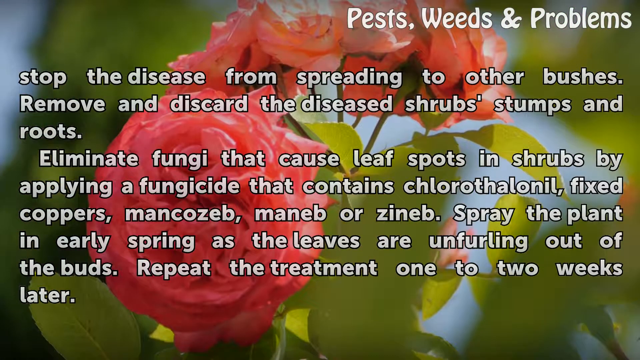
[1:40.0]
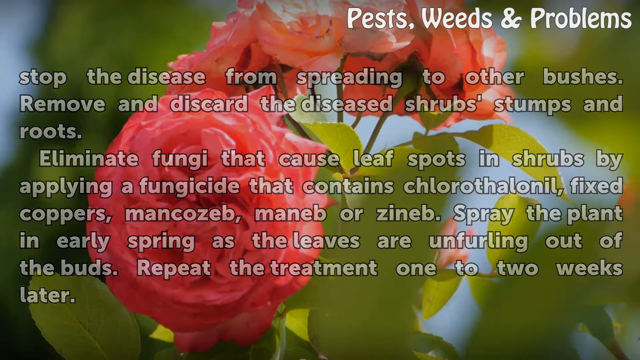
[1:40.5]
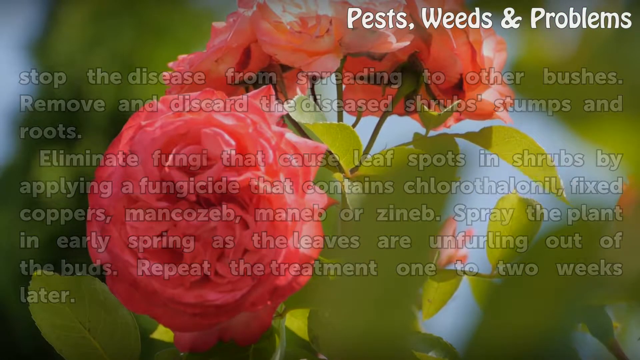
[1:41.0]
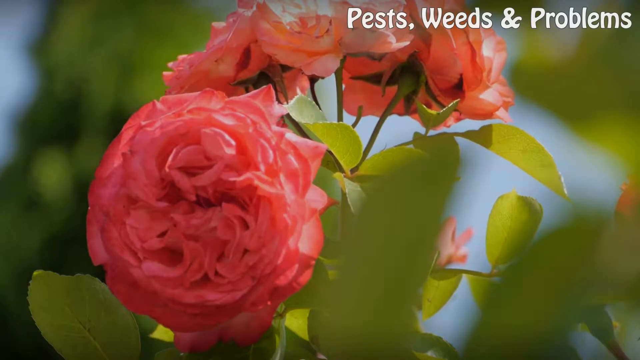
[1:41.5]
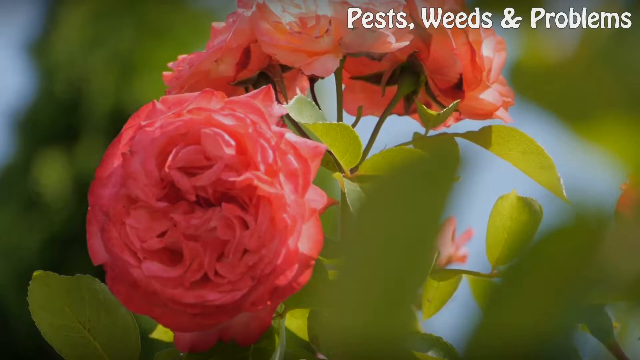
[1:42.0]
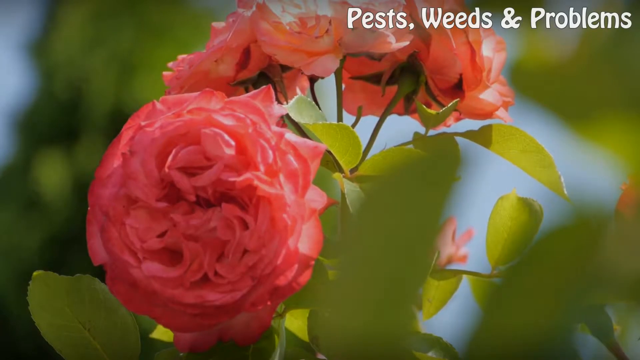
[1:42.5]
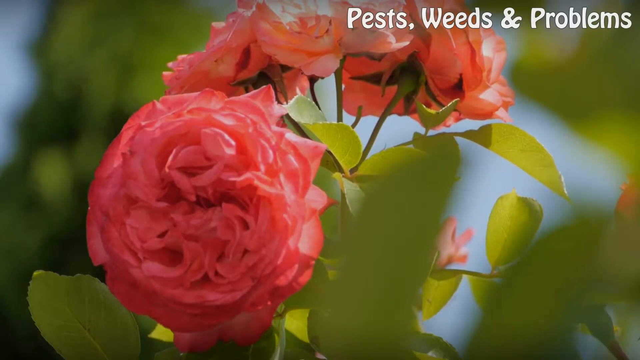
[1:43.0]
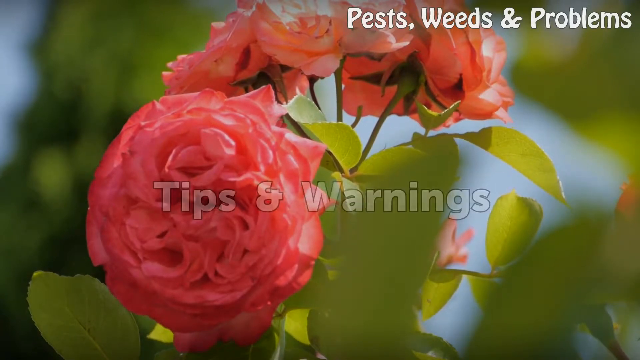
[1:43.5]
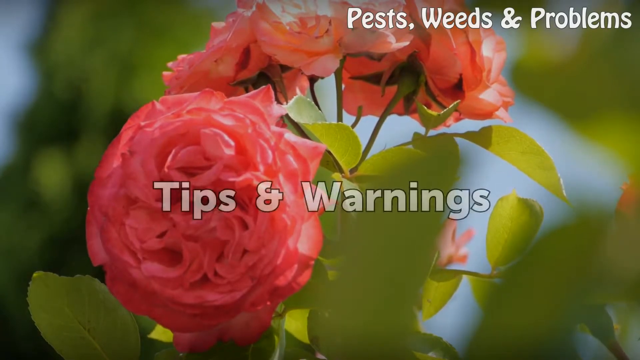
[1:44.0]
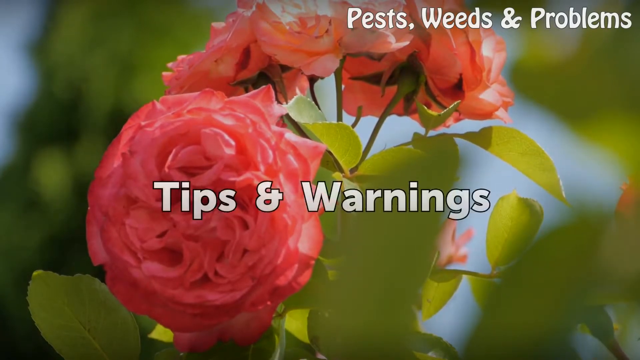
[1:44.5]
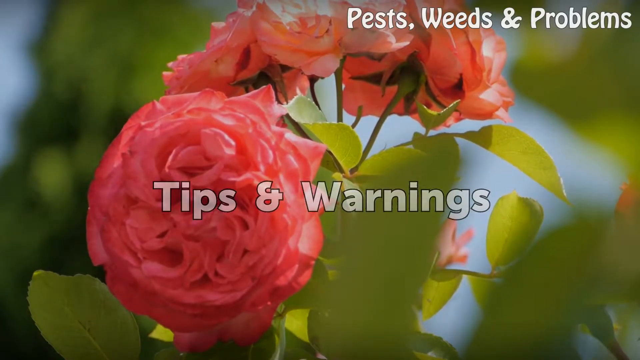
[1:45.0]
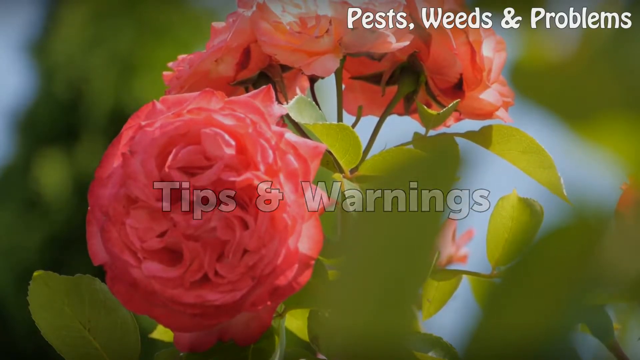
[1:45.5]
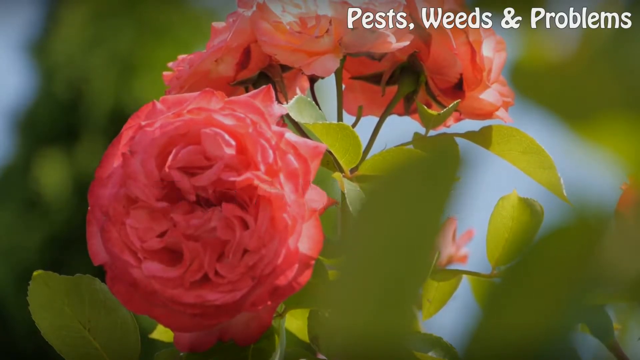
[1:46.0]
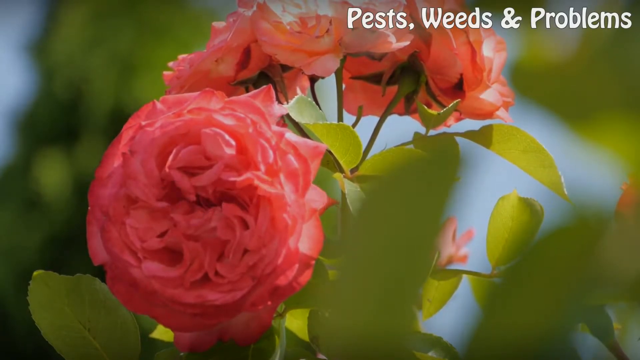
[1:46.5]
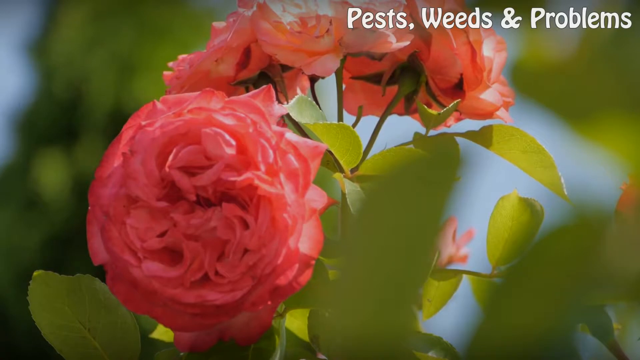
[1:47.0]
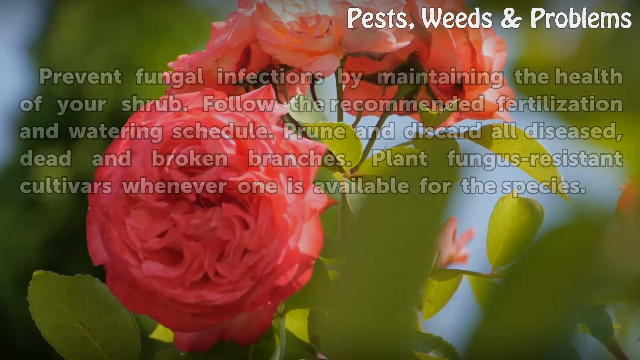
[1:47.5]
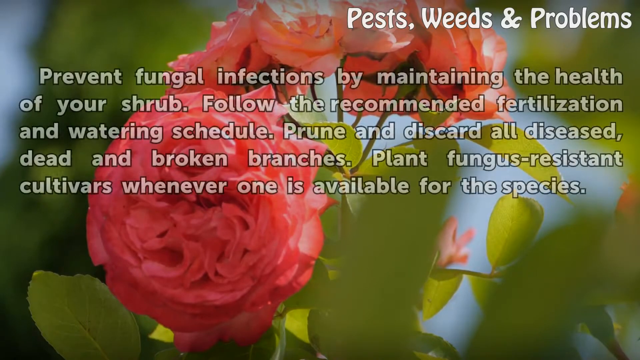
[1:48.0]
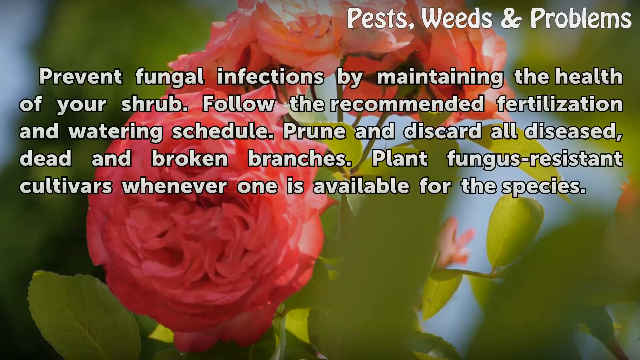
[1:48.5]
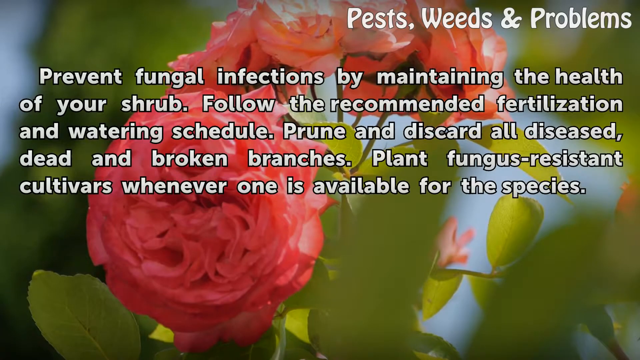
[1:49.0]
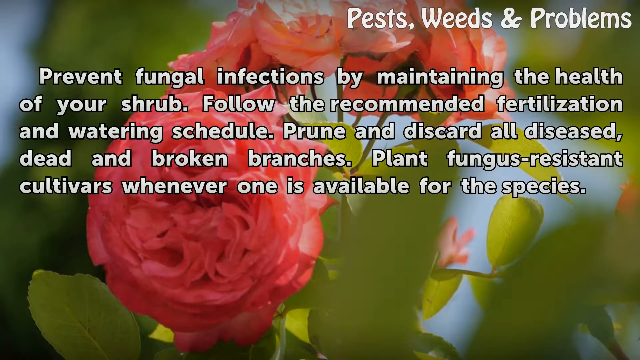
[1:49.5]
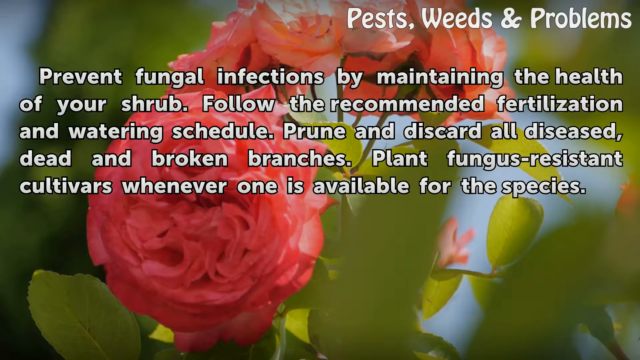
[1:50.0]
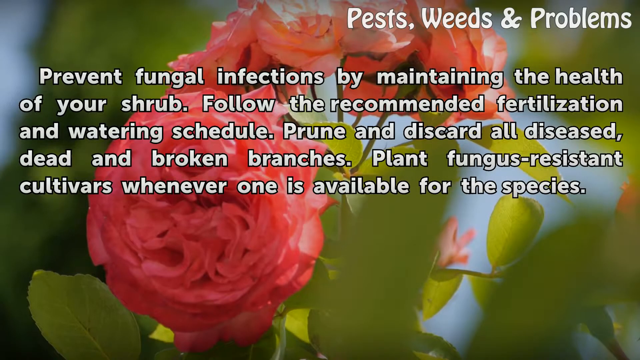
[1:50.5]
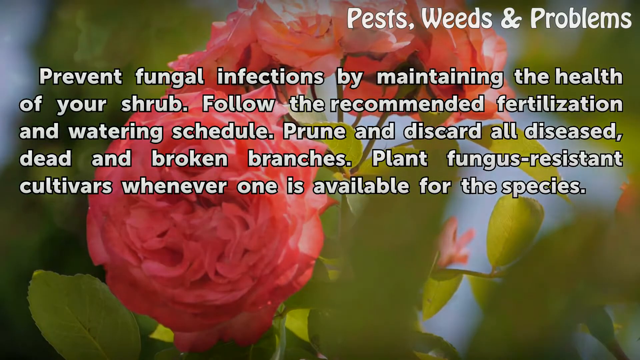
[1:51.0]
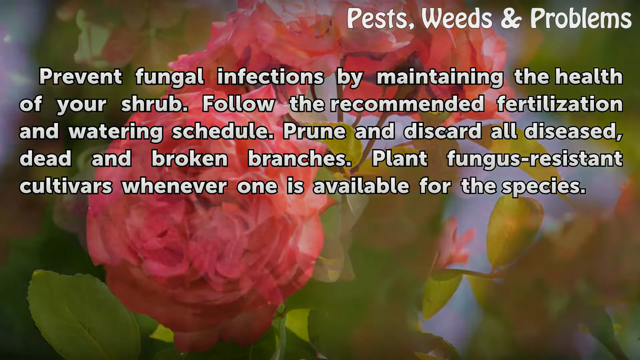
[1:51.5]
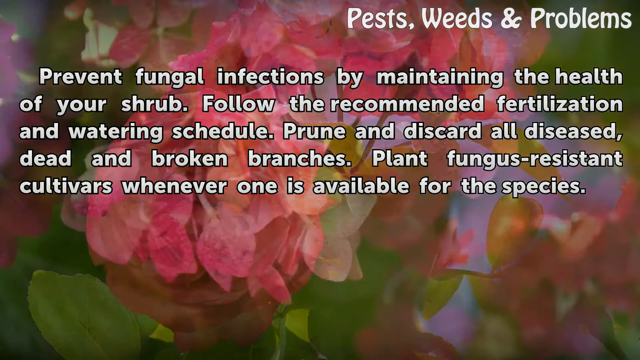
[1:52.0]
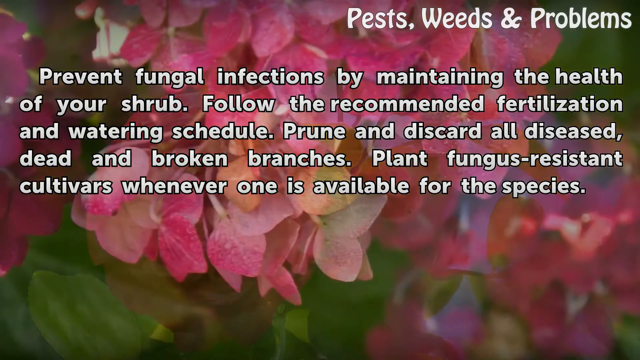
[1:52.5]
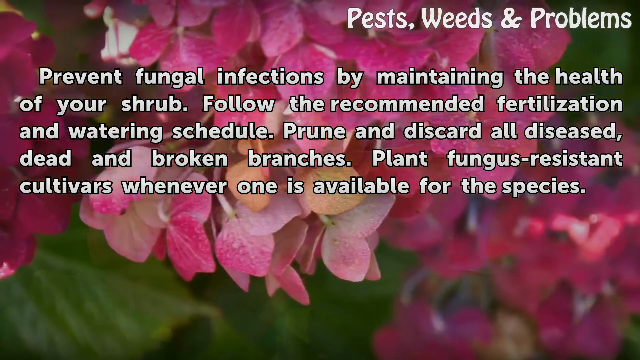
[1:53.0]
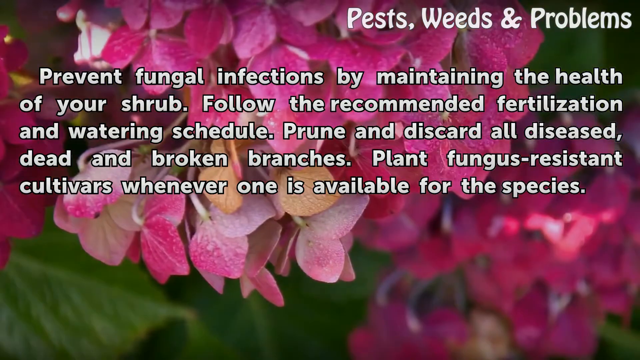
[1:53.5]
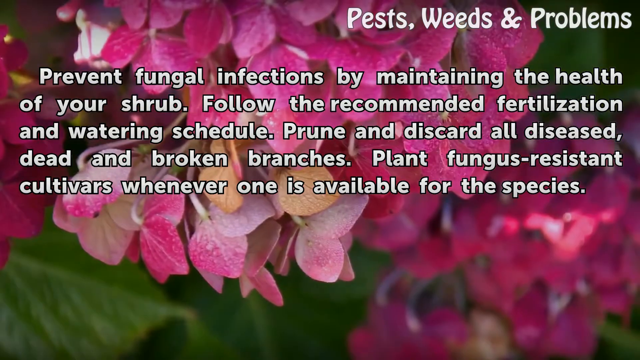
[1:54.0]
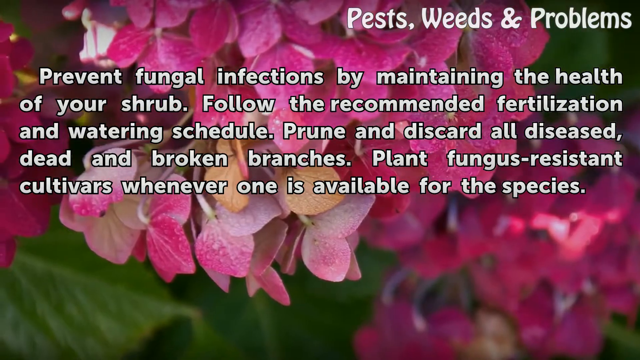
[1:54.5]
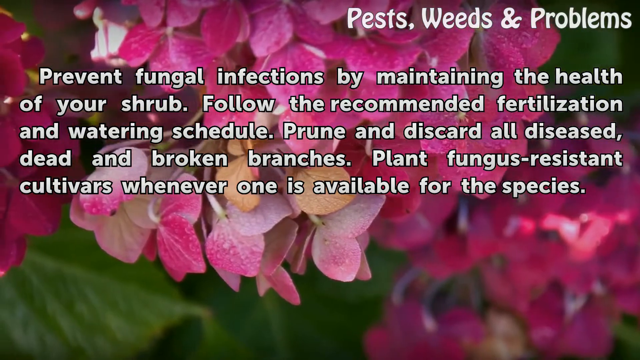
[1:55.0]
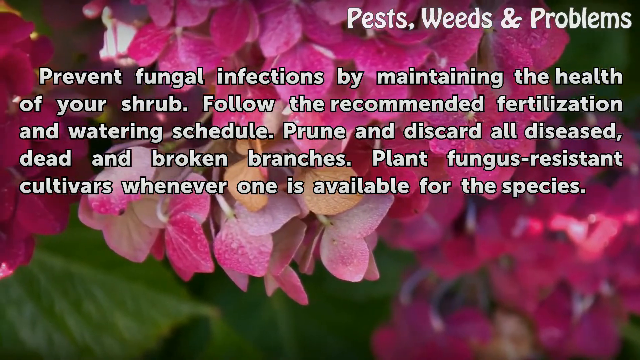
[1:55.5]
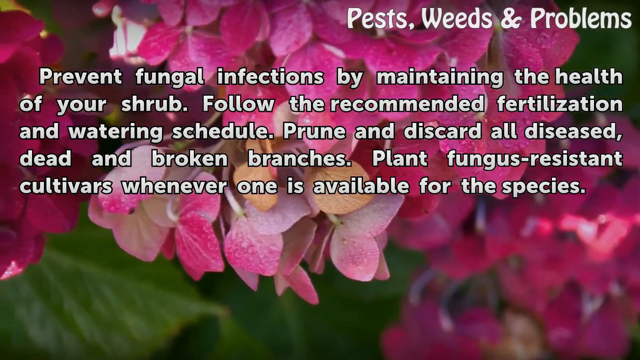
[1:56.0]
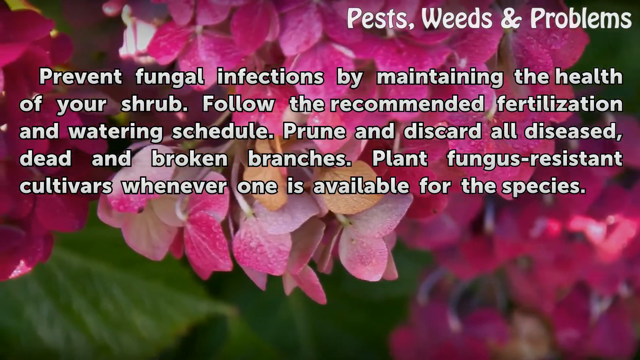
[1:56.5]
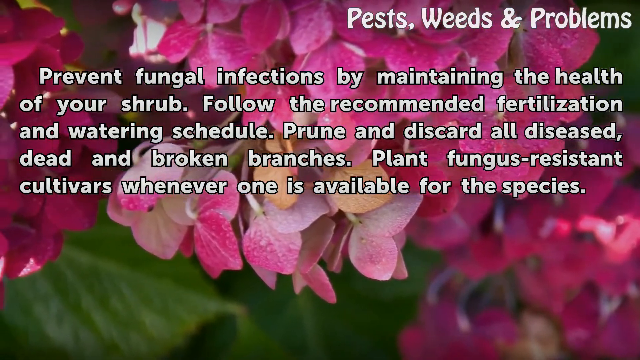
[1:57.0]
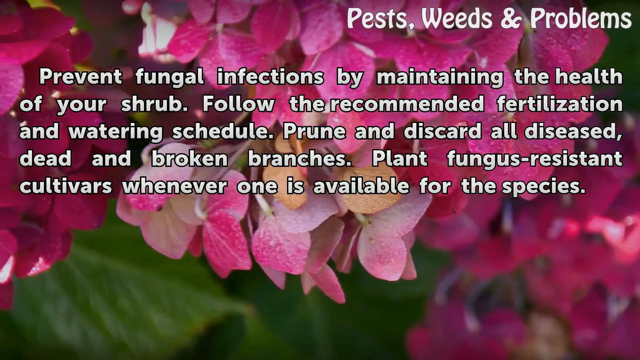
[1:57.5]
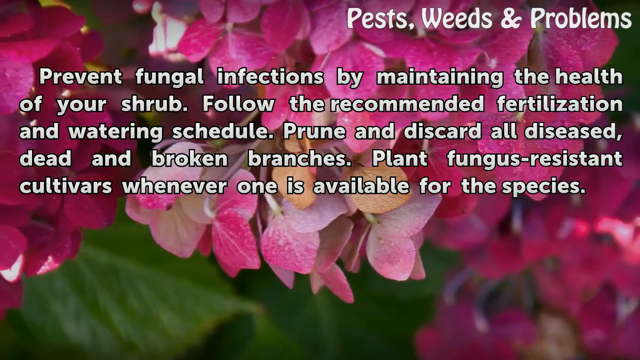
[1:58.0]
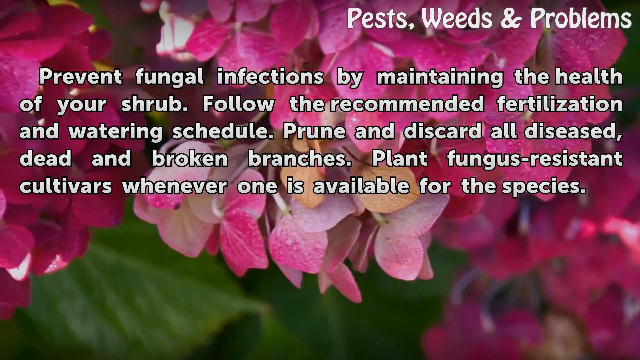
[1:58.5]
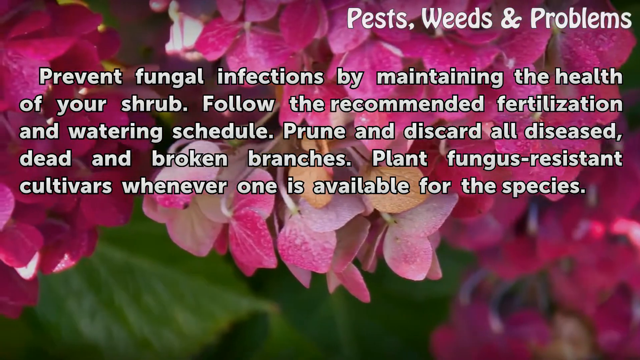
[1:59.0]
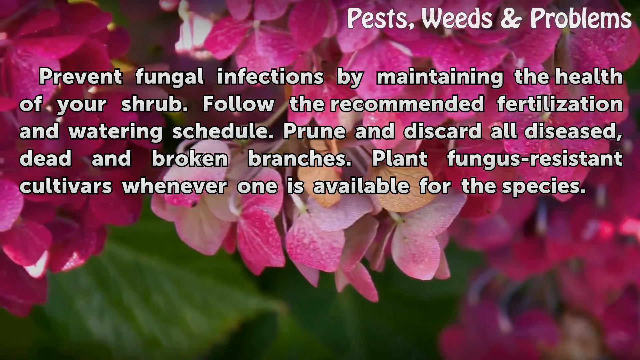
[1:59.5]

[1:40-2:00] The background is a close-up view of coral-colored roses, with a single one facing the camera and a cluster of them at the top of the screen, surrounded by blurry green leaves in the background. The words "Pest, Weeds, and Problems" in white letters are in the top right-hand corner and remain on the screen the whole time. The rest of the screen is filled with nine lines of white text: "stop the disease from spreading to other bushes.", "Remove and discard the diseased shrubs' stumps and", "roots.", then, beginning a new paragraph, "Eliminate fungi that cause leaf spots in shrubs by", "applying a fungicide that contains chlorothalonil, fixed", "coppers, mancozeb, maneb, and zineb. Spray the plant", "in early spring as the leaves are unfurling out of", "the buds. Repeat the treatment one to two weeks" and "later." The words stay for a few seconds before fading out. After a second, the words "Tips and Warnings" appear in white in the center of the screen, stay for a few seconds and fade out. Five lines of white text appear in the middle of the screen: "Prevent fungal infections by maintaining the health", "of your shrub. Follow the recommended fertilization", "and watering schedule. Prune and discard all diseased", "dead and broken branches. Plant fungus-resistant" and "cultivars whenever one is available for the species." The background changes to another close-up view of flowers, with multiple bright pink petals and blurry green leaves in the background.